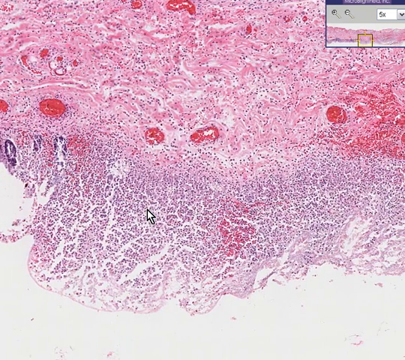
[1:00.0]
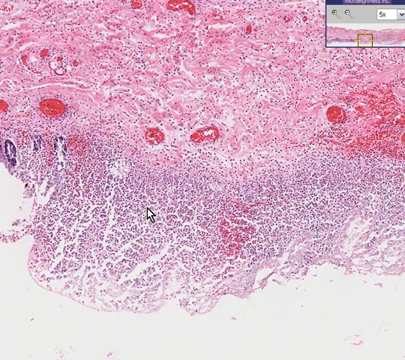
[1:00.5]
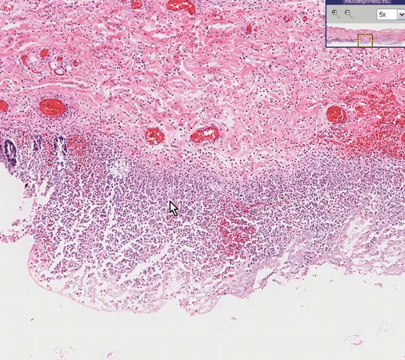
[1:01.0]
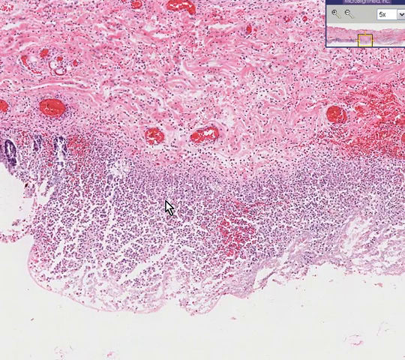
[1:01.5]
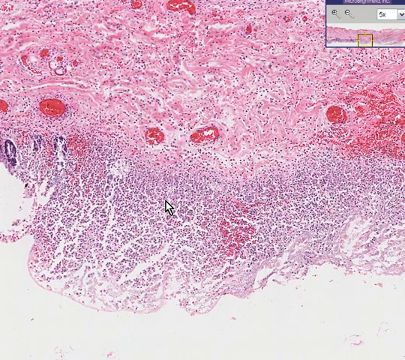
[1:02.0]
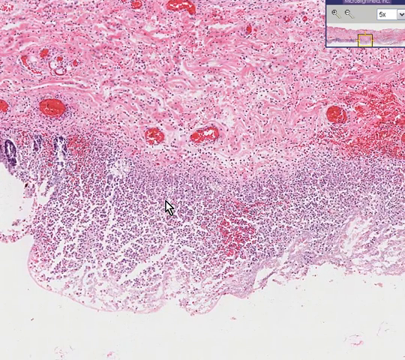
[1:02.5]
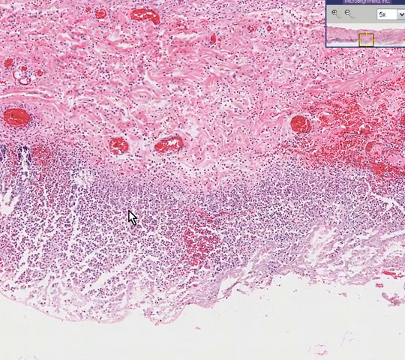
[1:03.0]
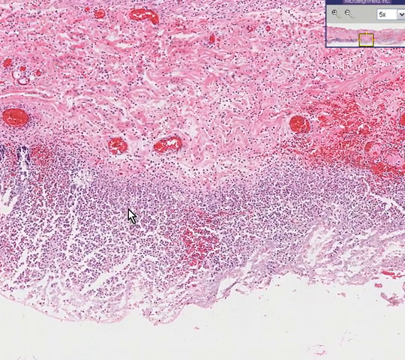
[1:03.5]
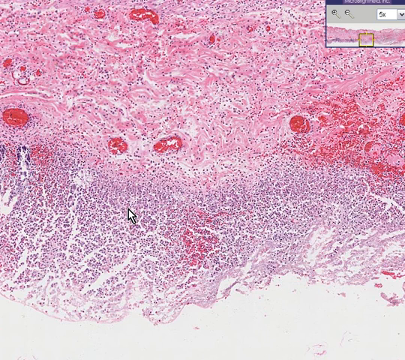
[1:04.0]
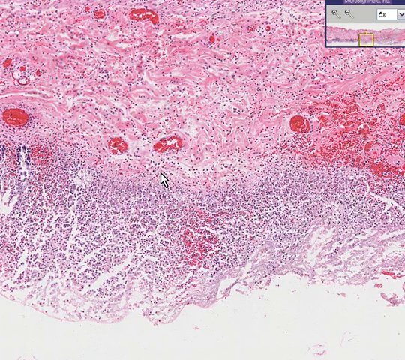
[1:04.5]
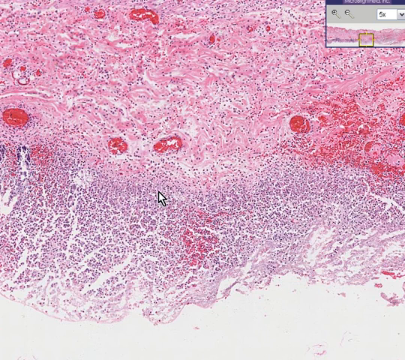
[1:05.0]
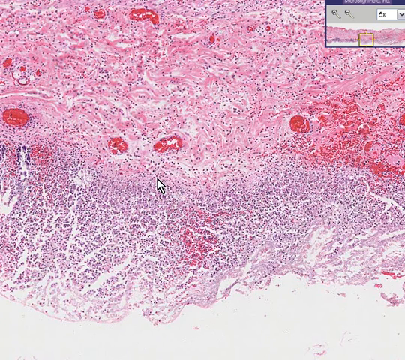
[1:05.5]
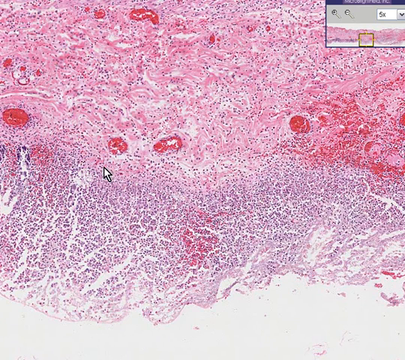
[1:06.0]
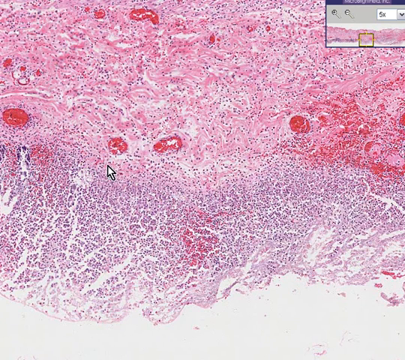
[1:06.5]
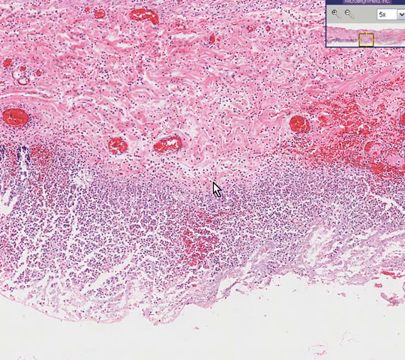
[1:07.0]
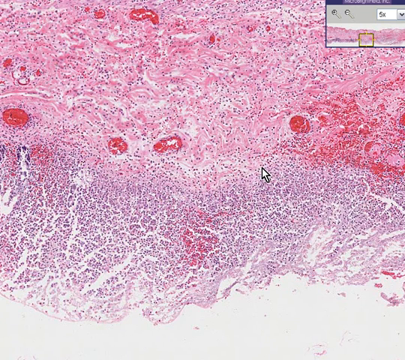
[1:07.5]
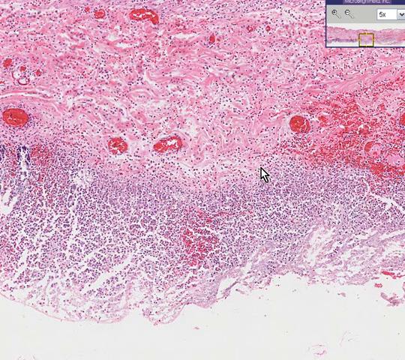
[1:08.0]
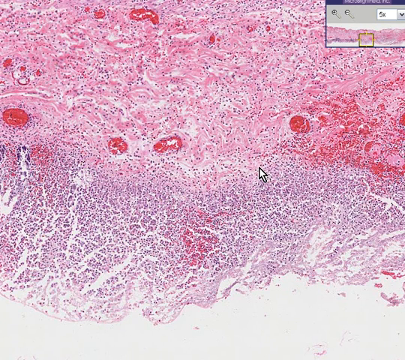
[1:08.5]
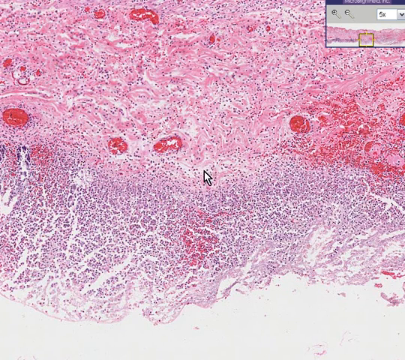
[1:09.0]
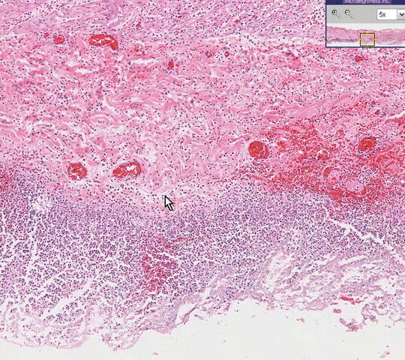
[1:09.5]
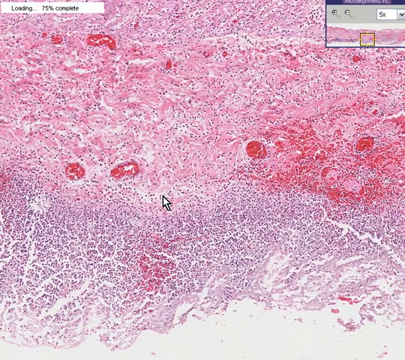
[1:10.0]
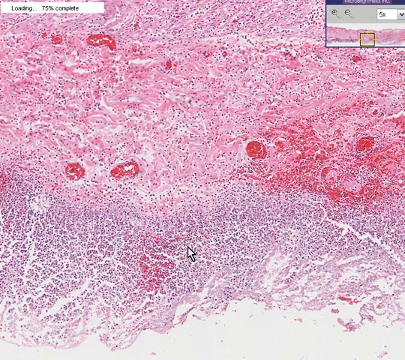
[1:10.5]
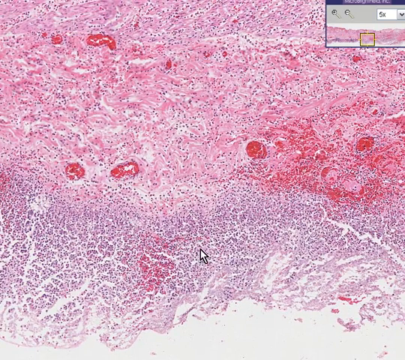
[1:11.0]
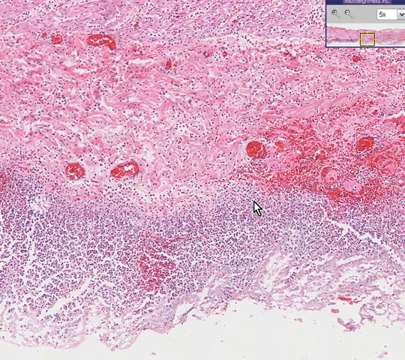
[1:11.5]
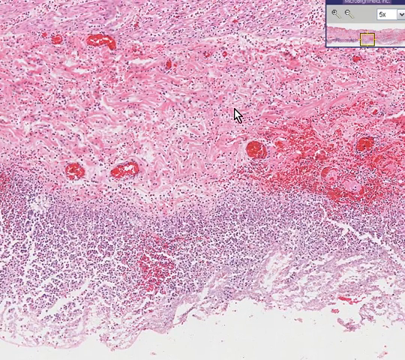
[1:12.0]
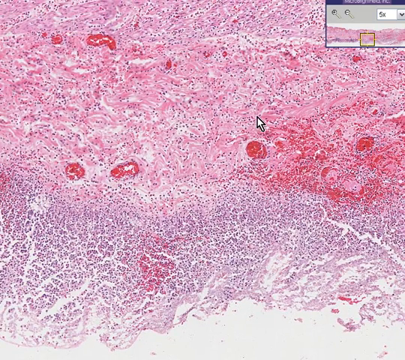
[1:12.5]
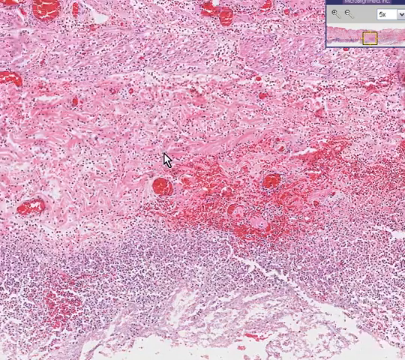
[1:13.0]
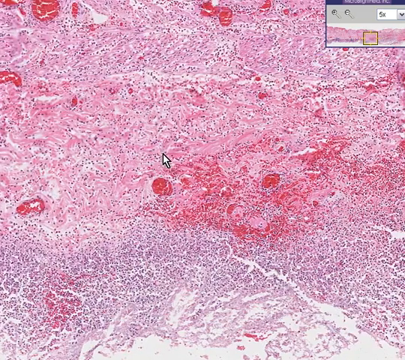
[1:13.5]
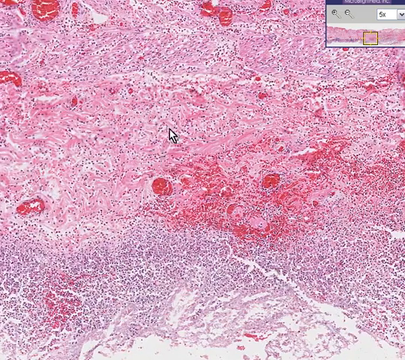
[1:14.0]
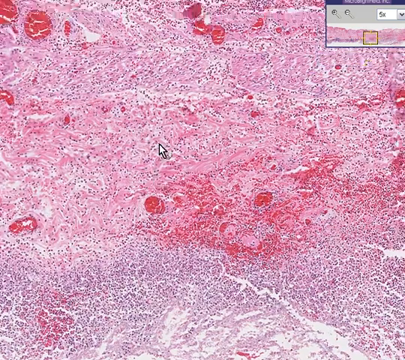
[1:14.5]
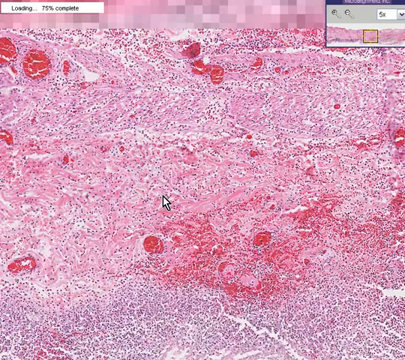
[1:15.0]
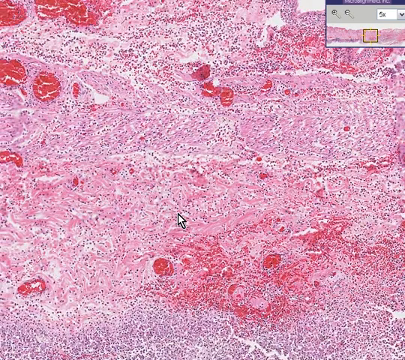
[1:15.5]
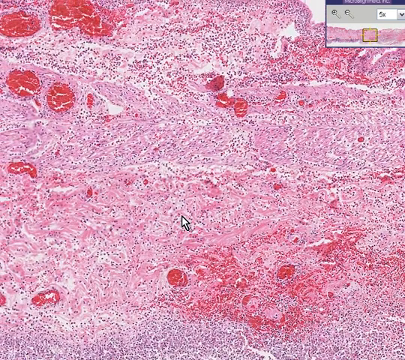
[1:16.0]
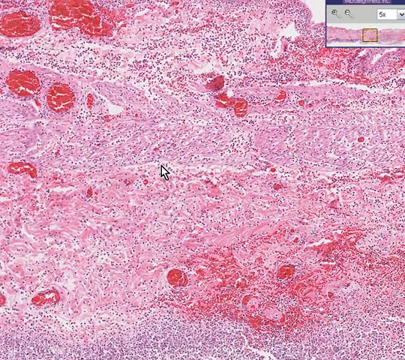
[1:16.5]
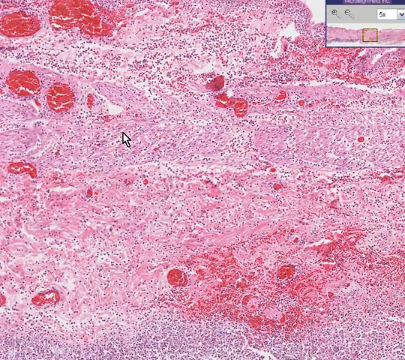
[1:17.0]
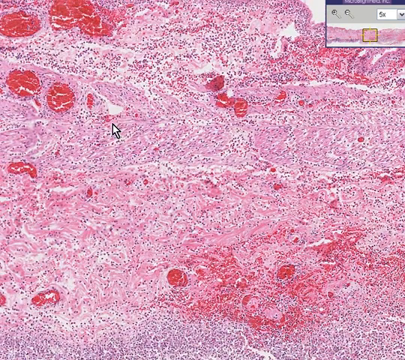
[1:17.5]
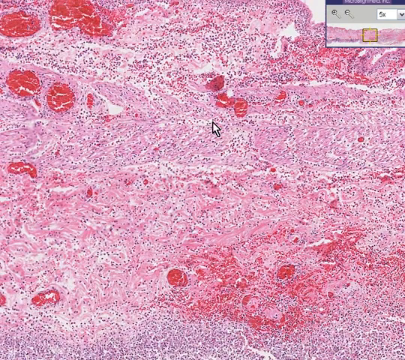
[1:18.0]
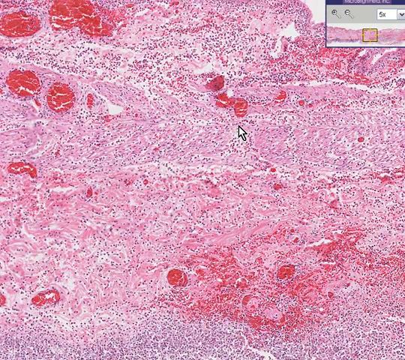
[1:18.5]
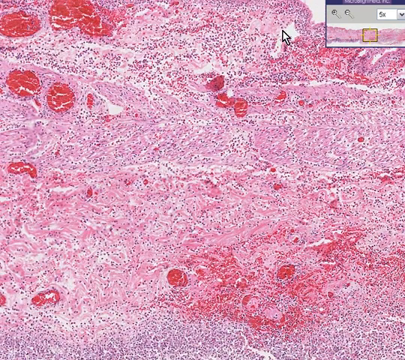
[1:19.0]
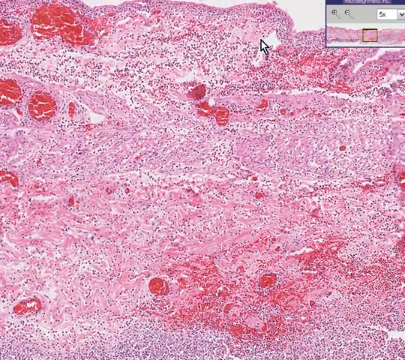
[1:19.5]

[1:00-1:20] A green screen appears with a small pink and purple image at the top left corner, which then enlarges to show a pink structure covered in dark pink, reddish circles, with light pink areas and purple at the bottom. It looks sort of like a satellite image of land next to the ocean with rivers running through it. The mouse cursor goes up and points at tiny purple dots. It then grabs the image and scoots it to the right, scoots it to the right again, and then scoots it up, revealing more lines and more purple dots.